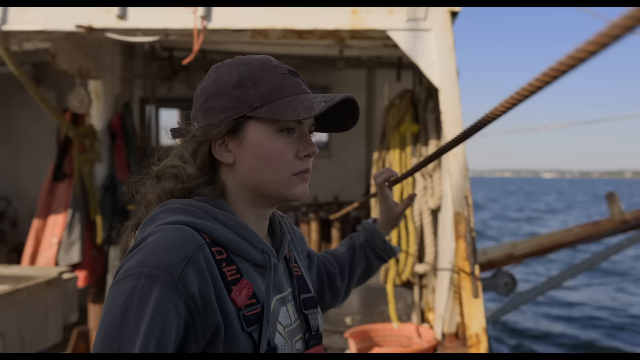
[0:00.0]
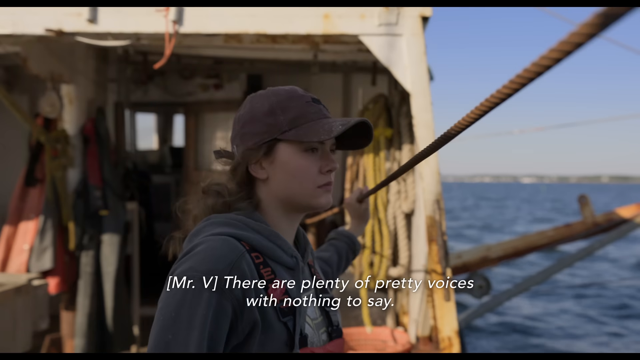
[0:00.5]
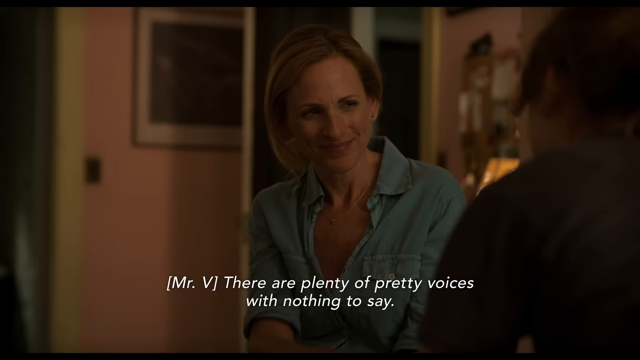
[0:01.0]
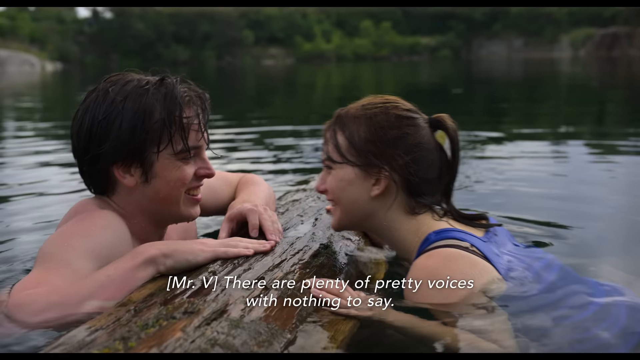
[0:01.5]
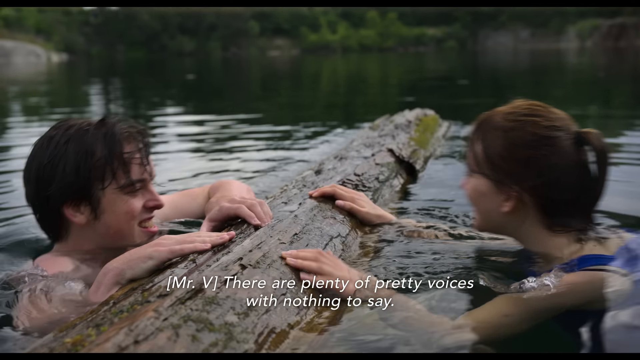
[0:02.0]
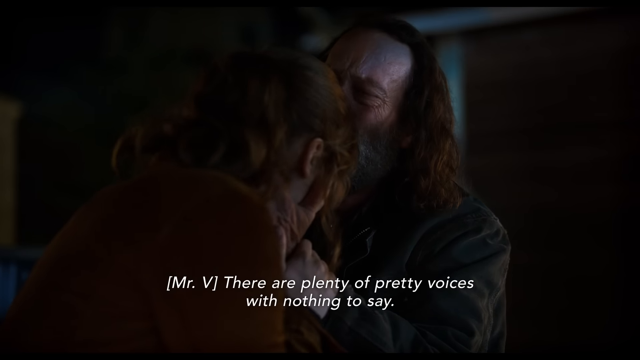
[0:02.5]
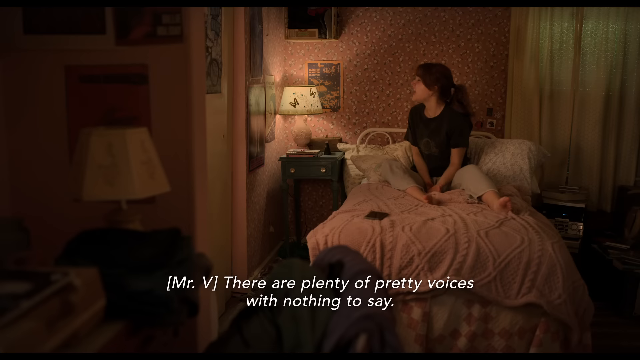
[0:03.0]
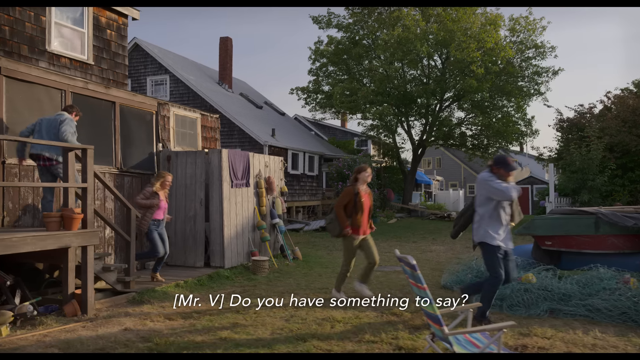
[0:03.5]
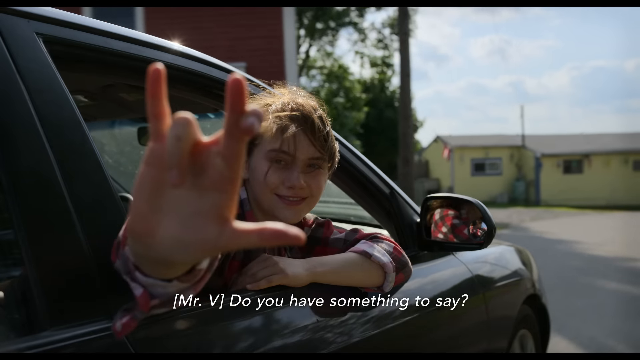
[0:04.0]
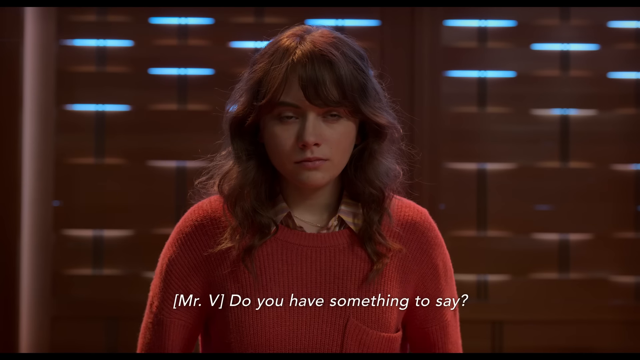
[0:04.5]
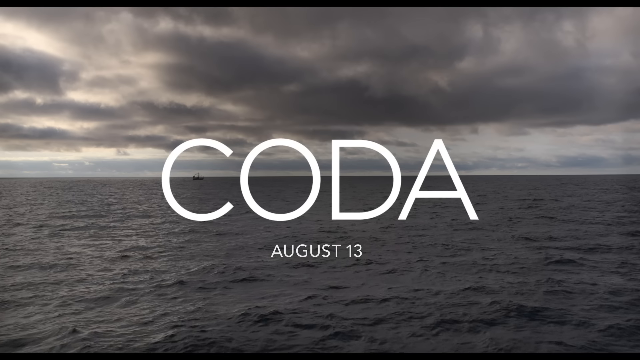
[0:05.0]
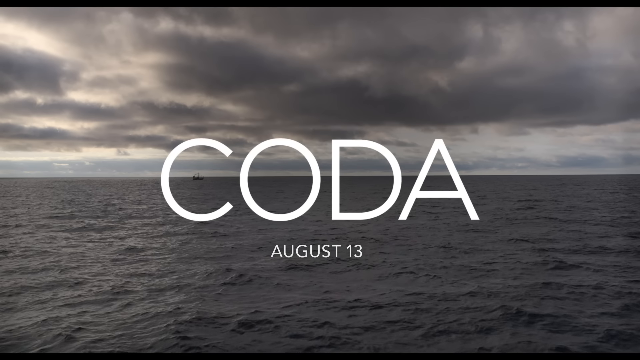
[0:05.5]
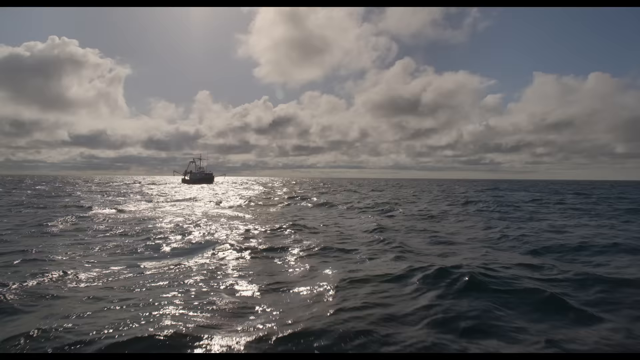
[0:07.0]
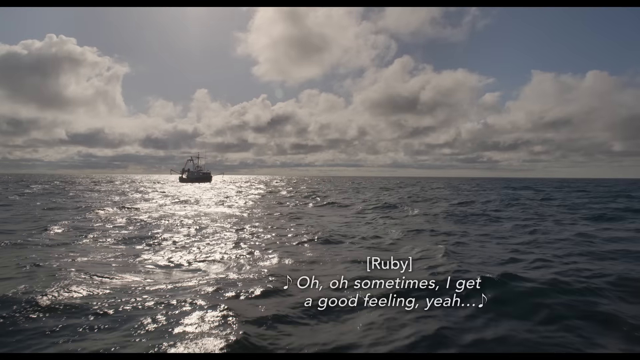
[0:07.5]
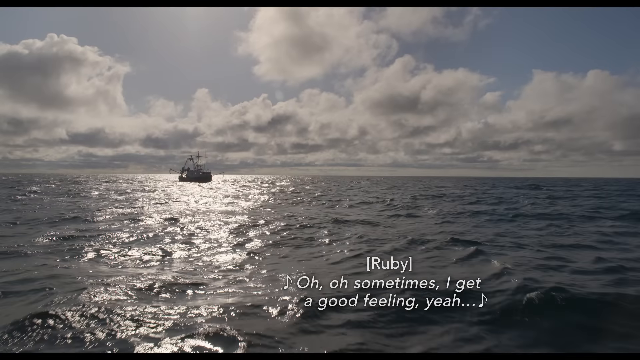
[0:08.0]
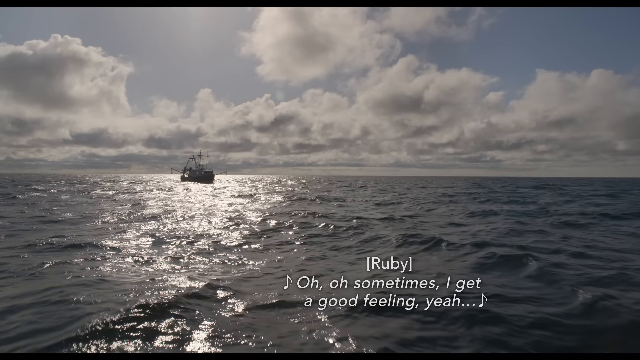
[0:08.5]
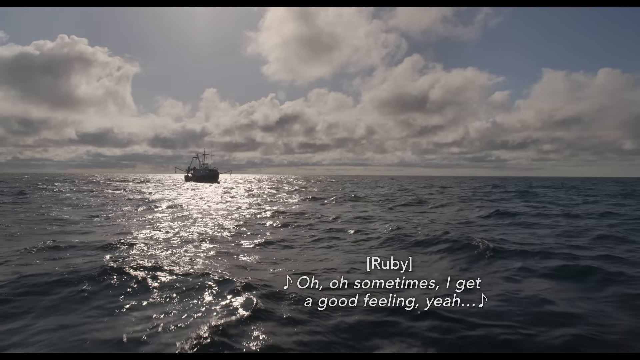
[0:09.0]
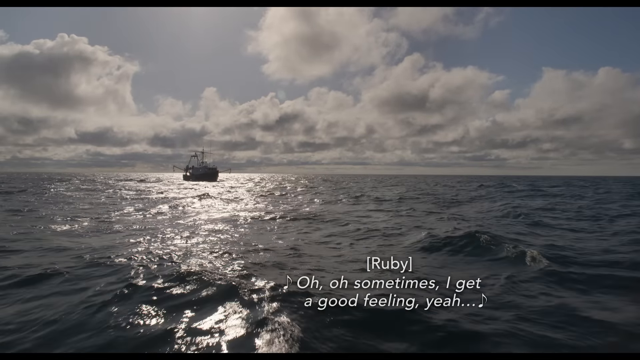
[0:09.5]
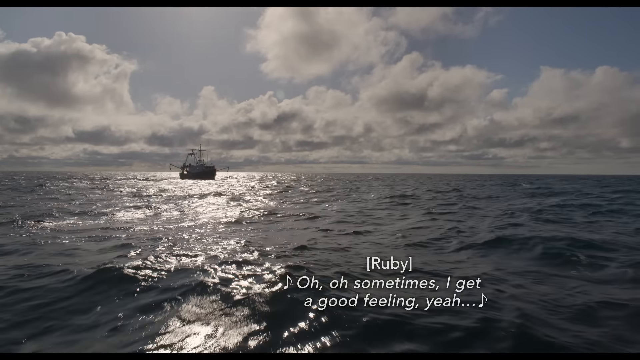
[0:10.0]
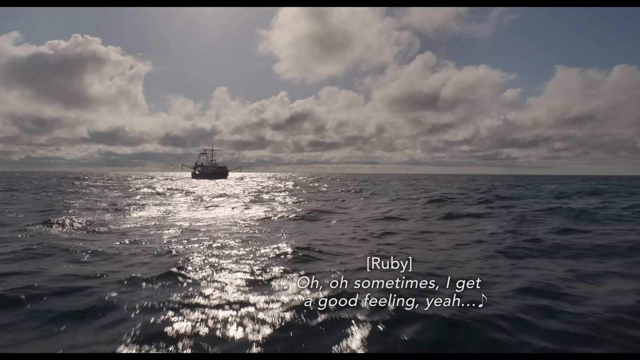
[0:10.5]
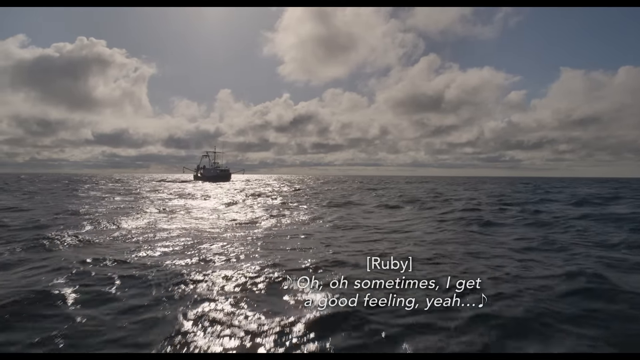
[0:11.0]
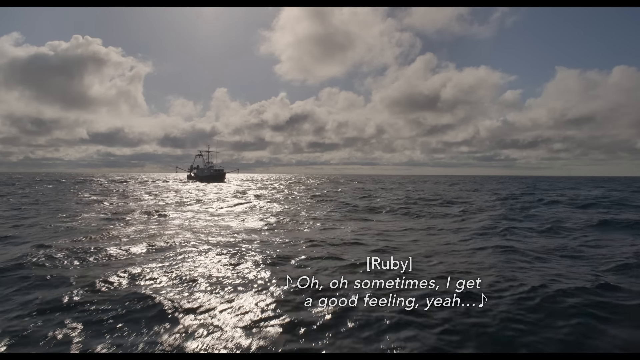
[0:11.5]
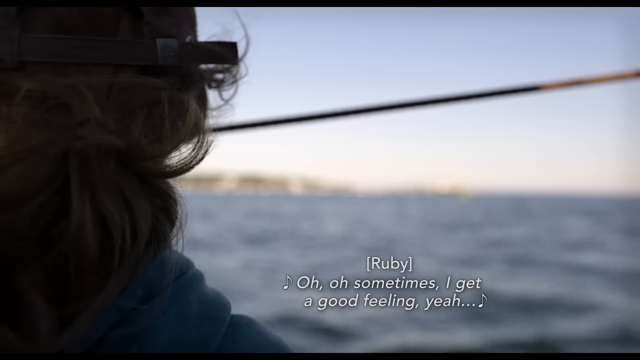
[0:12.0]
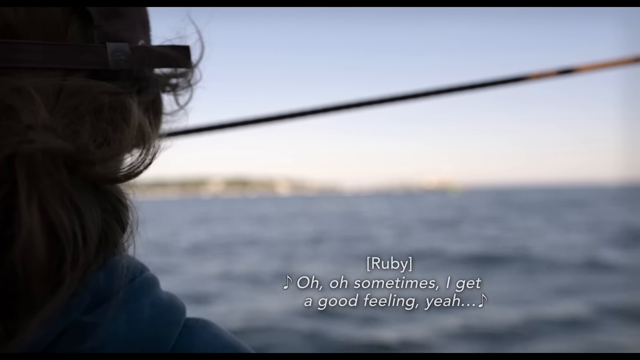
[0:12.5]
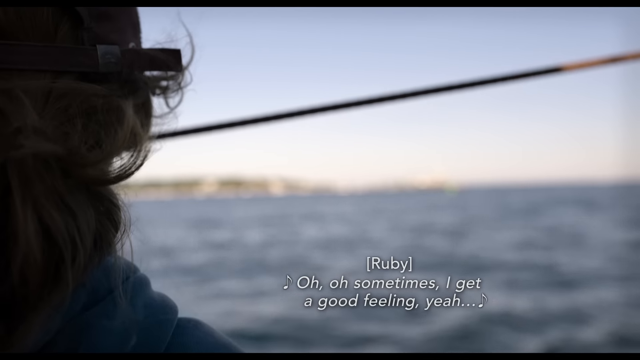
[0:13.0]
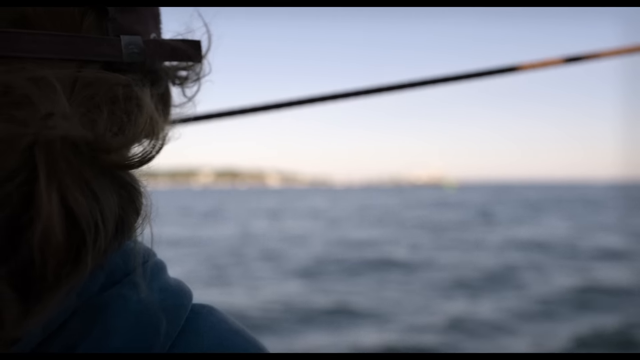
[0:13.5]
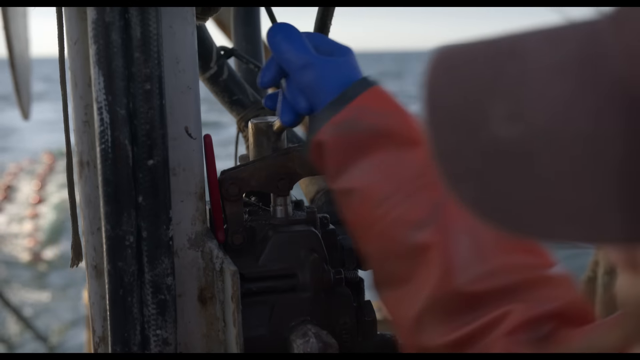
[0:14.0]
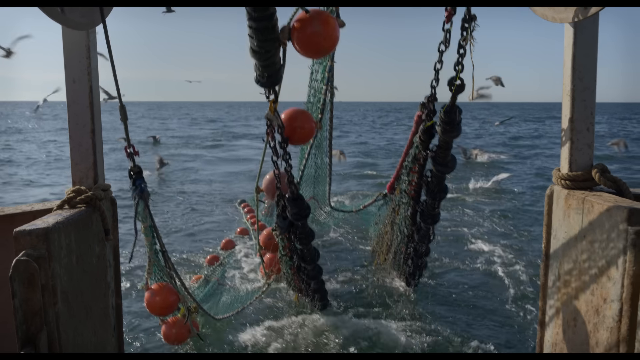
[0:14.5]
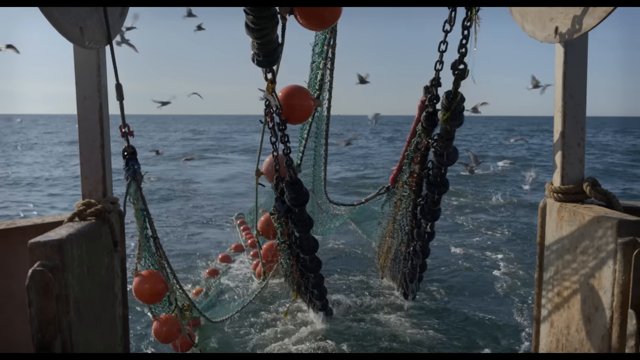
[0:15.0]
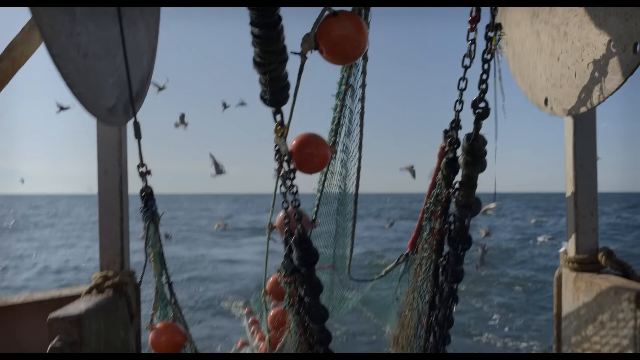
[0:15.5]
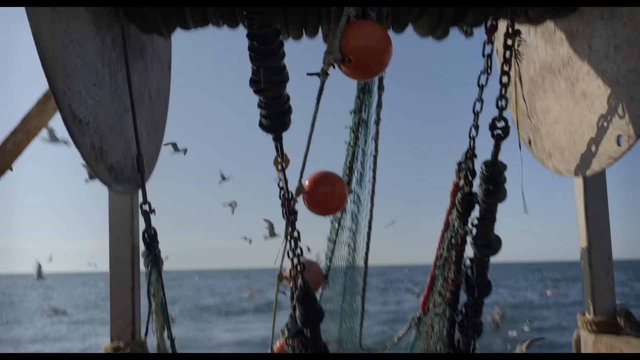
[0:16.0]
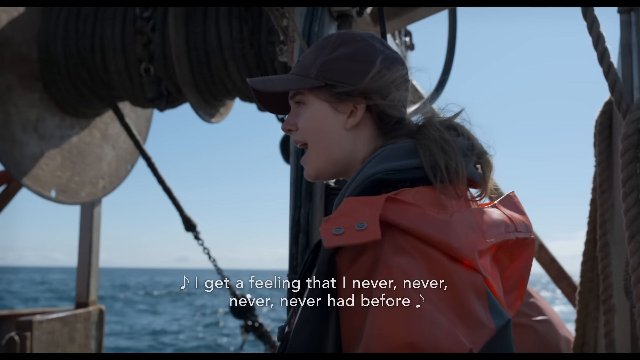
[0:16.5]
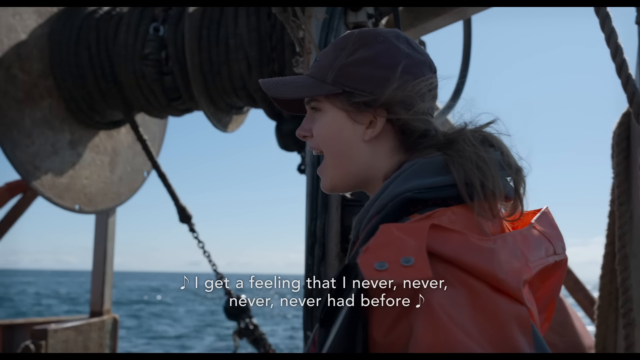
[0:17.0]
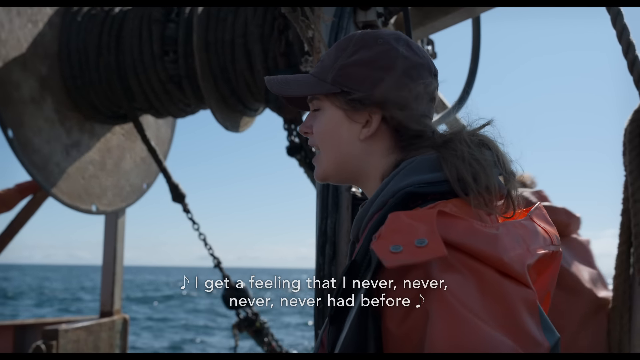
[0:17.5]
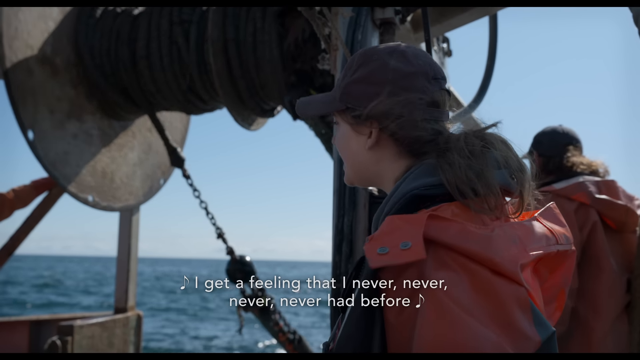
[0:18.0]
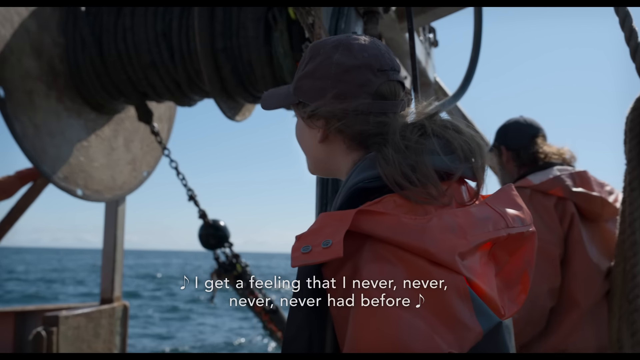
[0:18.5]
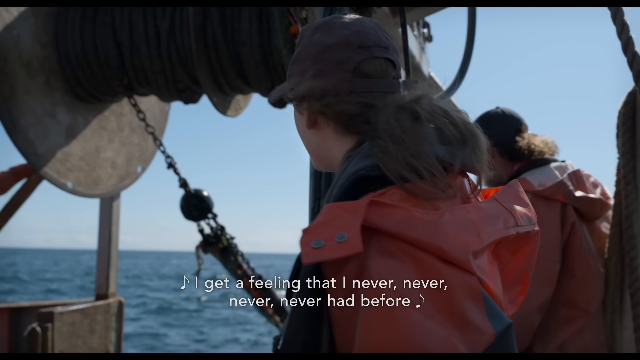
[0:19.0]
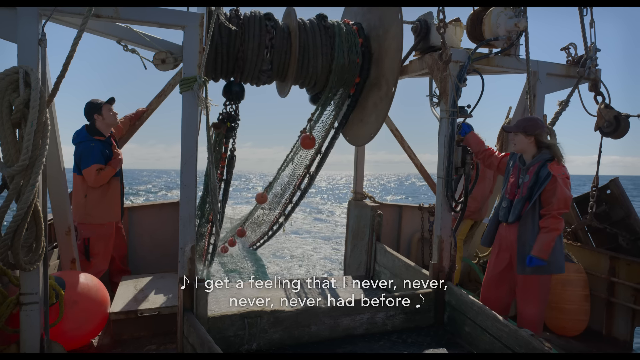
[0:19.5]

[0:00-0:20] The video opens on a ship, where a woman wears a brown baseball cap and what looks like a gray hoodie, with straps over her shoulder as if she has a backpack on. The scene switches to what looks like the inside of a home with pink walls, where two people face each other. The one talking faces the camera: a woman with shoulder-length blonde hair in a partially unbuttoned blue button-up shirt. Captions at the bottom read "Mr. D. There are plenty of pretty voices with nothing to say." The scene switches again to two people in the water, apparently a lake, with a floating log between them that they are both balanced on. Seen in side profile, they smile and look at each other; the male on the left is shirtless, and the girl on the right wears a blue top.